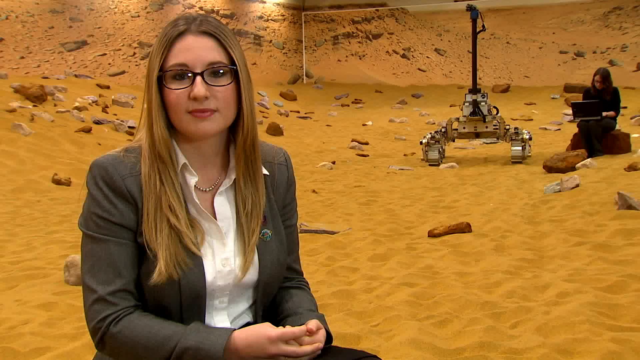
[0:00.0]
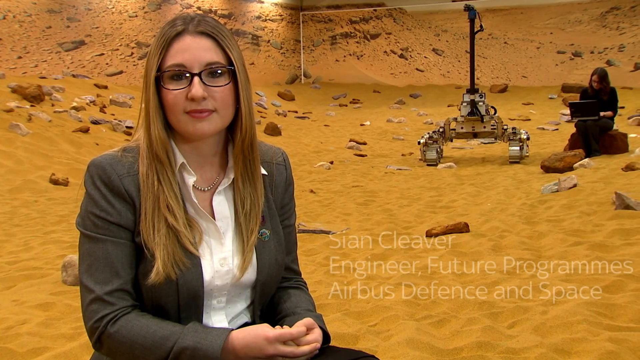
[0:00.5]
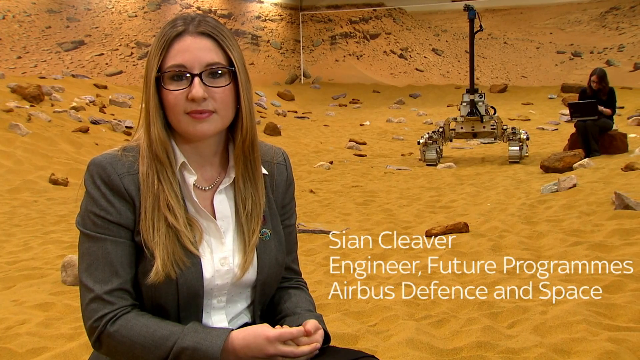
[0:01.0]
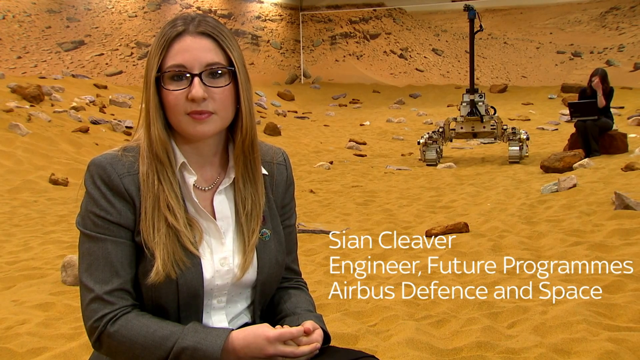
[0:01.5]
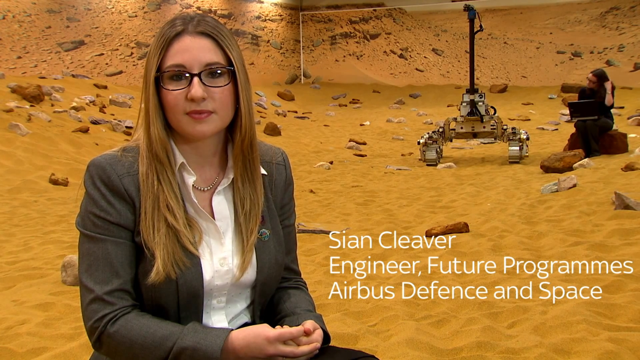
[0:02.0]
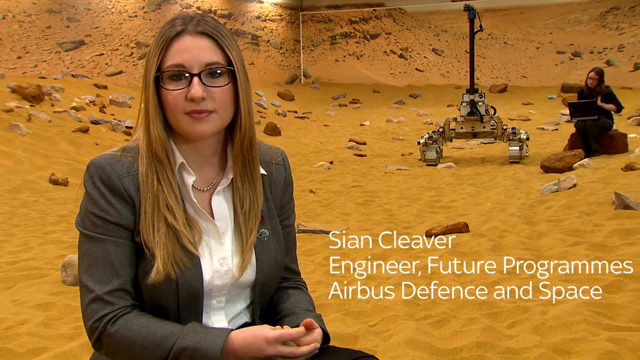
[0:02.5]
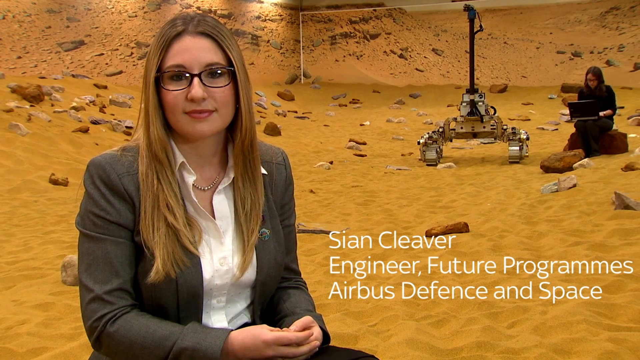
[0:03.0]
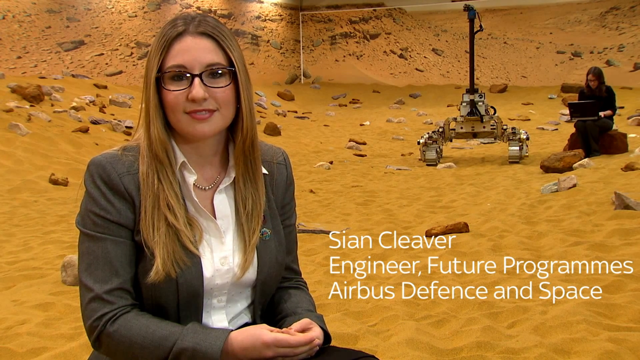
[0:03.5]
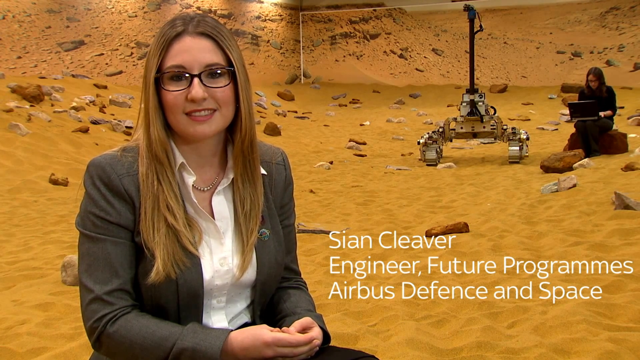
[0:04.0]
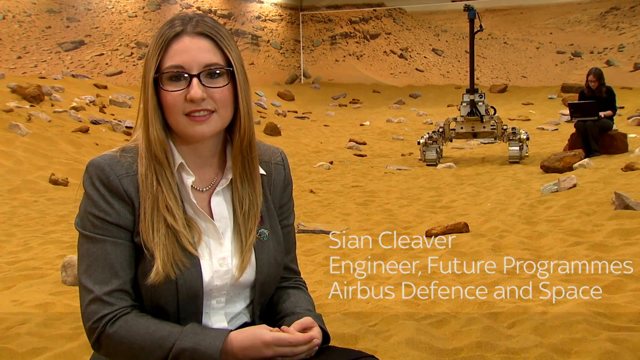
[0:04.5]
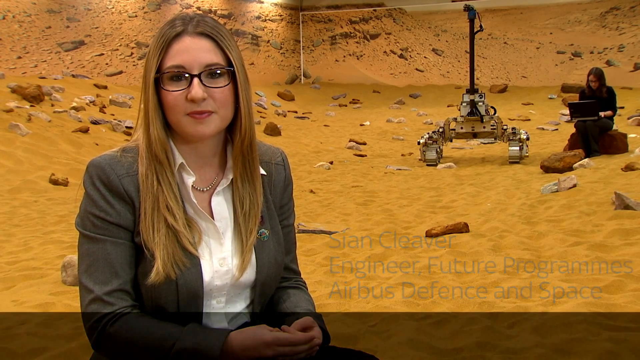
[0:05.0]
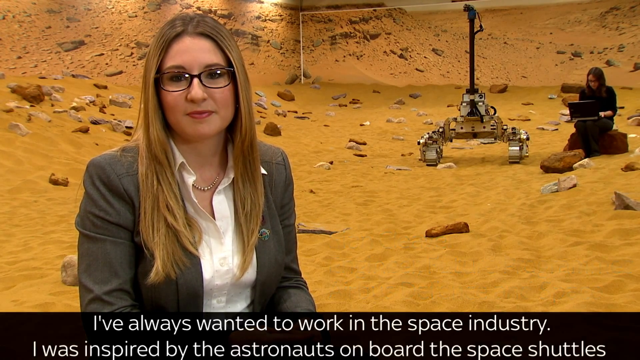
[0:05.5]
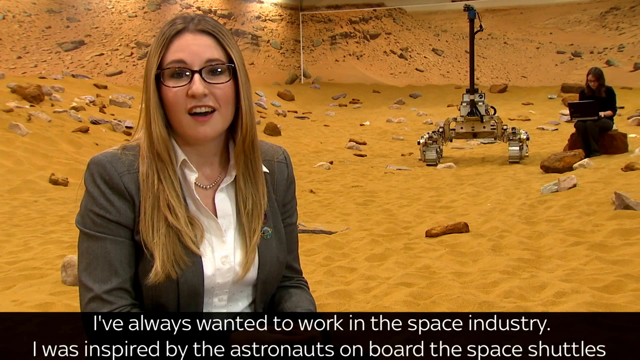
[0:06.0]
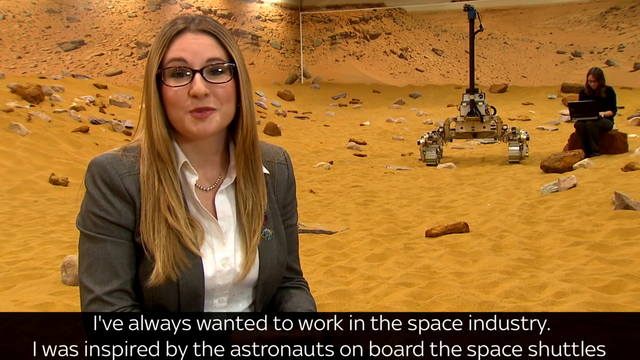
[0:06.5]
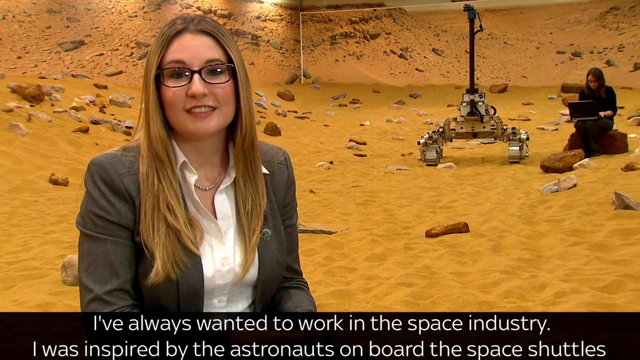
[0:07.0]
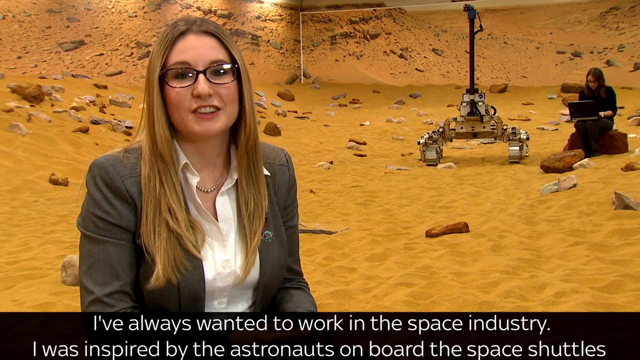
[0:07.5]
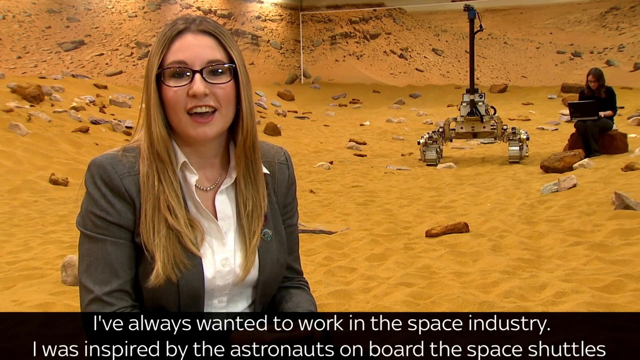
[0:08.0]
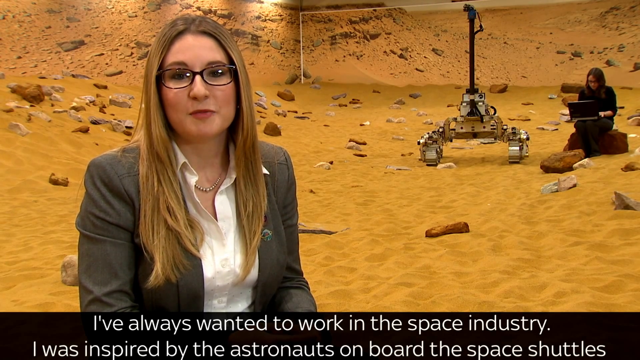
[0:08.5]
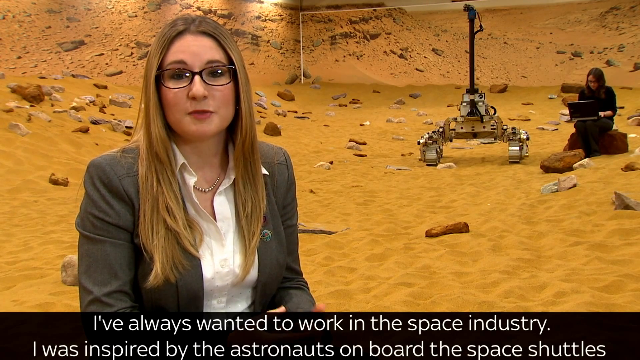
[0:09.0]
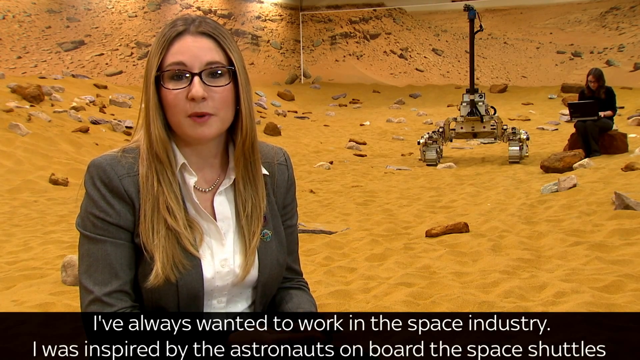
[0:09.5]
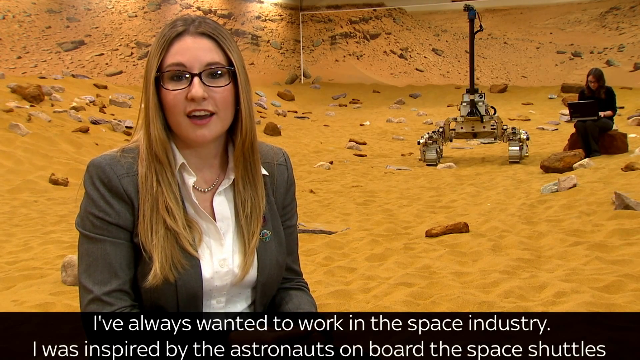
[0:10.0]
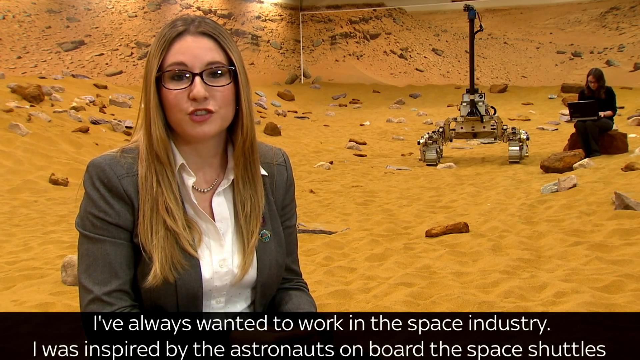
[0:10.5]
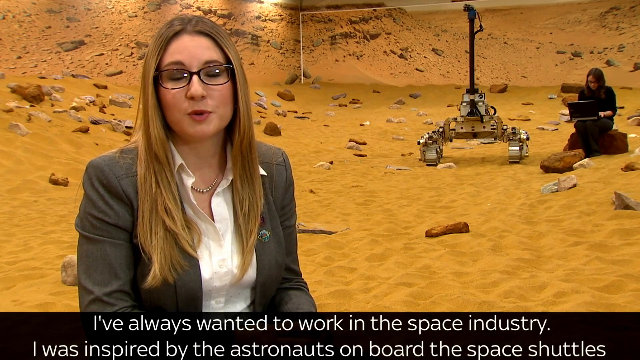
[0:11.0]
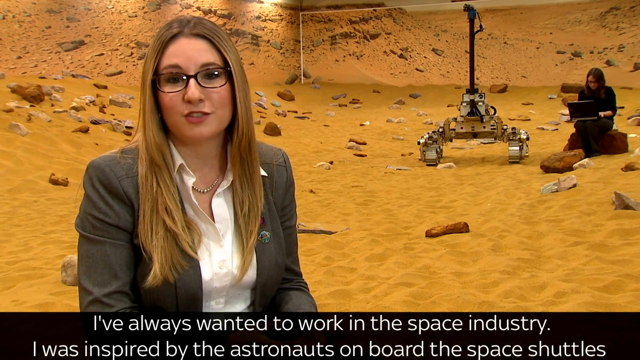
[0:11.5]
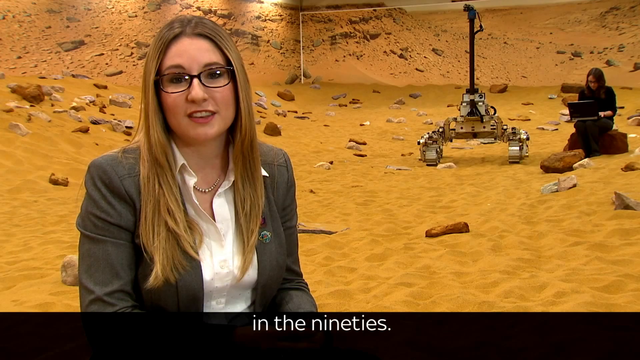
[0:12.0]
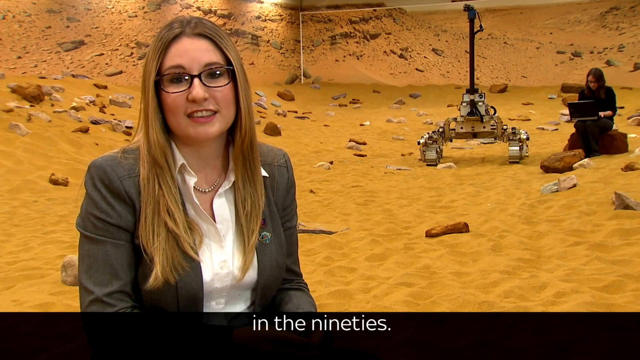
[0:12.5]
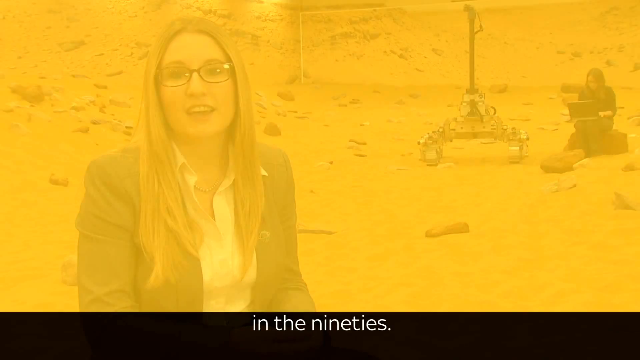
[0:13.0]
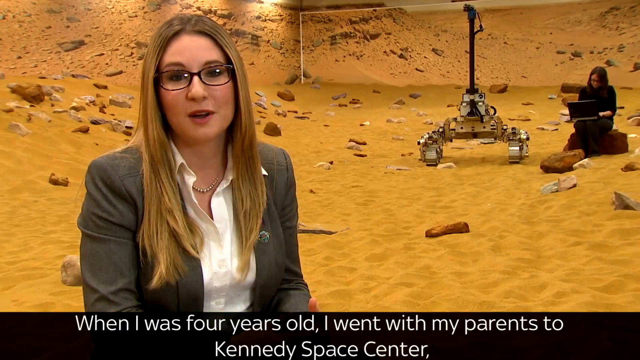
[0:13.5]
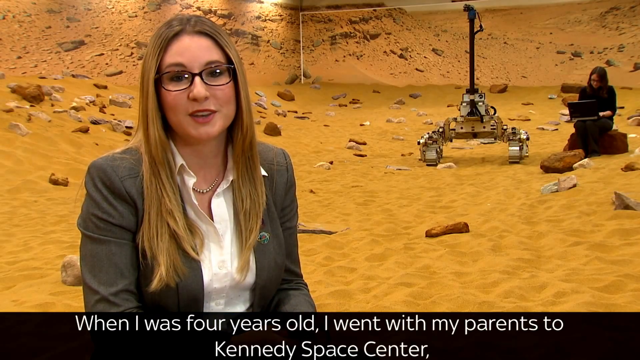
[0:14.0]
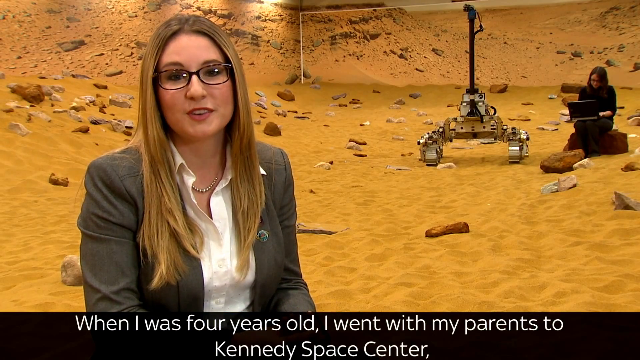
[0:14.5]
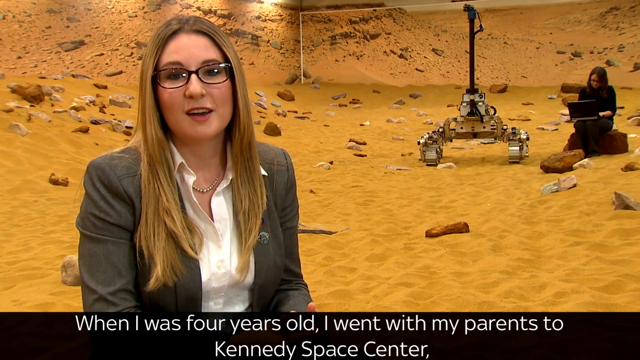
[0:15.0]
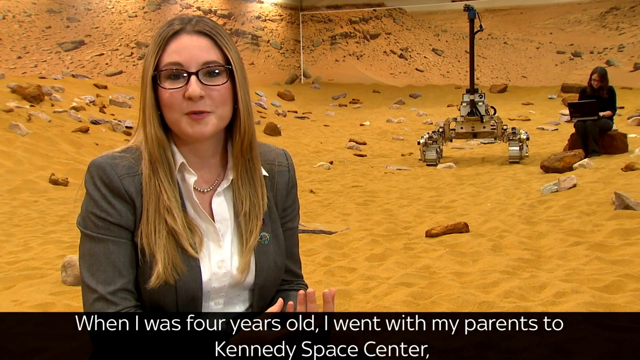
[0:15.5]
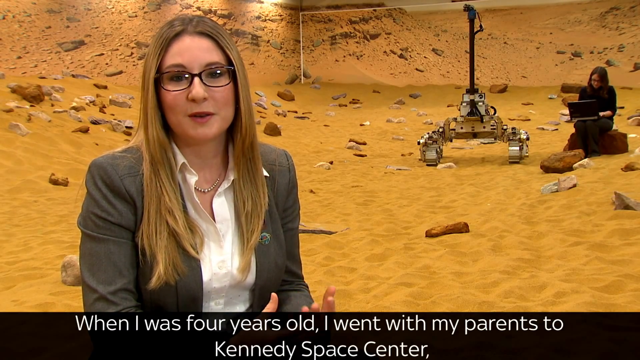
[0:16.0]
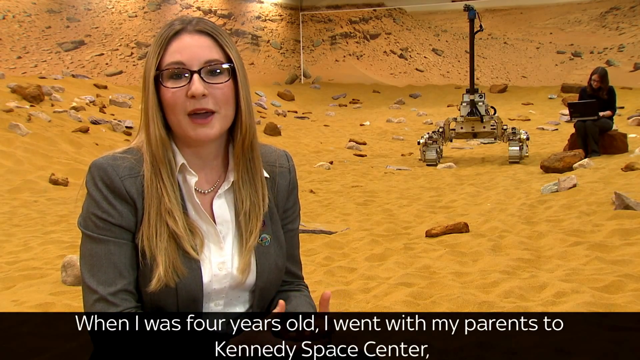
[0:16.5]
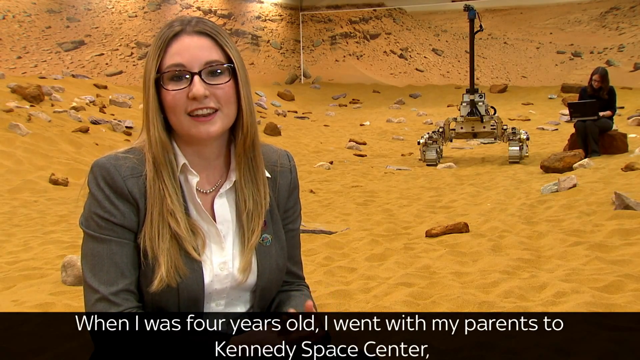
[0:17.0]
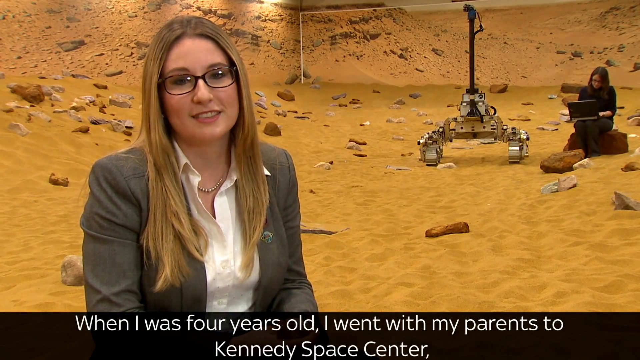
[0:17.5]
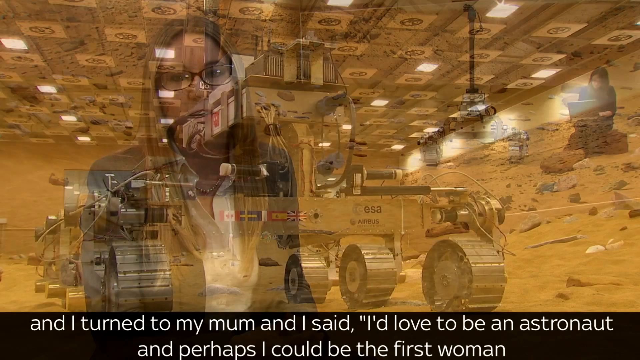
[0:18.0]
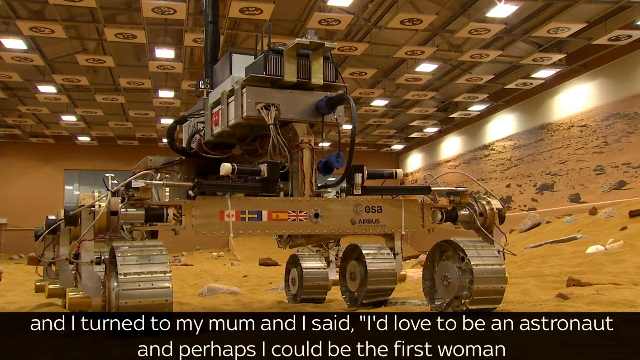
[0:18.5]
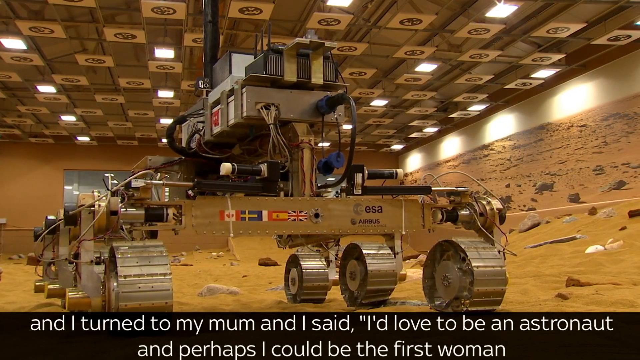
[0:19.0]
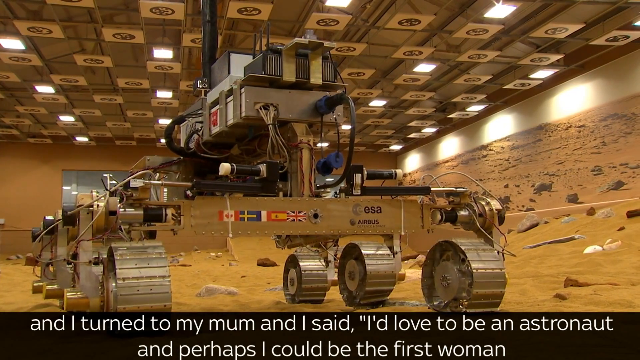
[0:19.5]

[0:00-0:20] A woman who appears to be in her 30s sits on the left side of the screen, looking directly at the camera. She has longer dirty blonde hair, wears glasses, and has a grey suit jacket over a white collared shirt. To the right, white text reads "CM Cleaver, Engineer, Future Programs, Airbus Defense and Space." Behind her is what could potentially be a planet or moon of some sort, with orange dirt ground and rocks in the background. Toward her right is a mechanical device with a pole that stands straight up, and to the right of this, in the background, is another woman facing the camera. She has dark hair, appears to have a laptop on her lap, and has her left hand kind of in front of her face. The woman in the background moves a little, and the woman in front on the left begins speaking. White text appears at the bottom, seemingly translating what she is saying. Her head moves slightly left to right as she speaks, and at one point she brings her hand slightly into the picture. The video then transitions to an indoor location with a very high ceiling, probably 40 to 50 feet high. The ground has a sand-like consistency, and there appear to be rocks and what look like metal wheels in two different rows, almost vertical in the frame. In the background is a massive metal device that goes all the way up to the ceiling, with wires coming out of it.